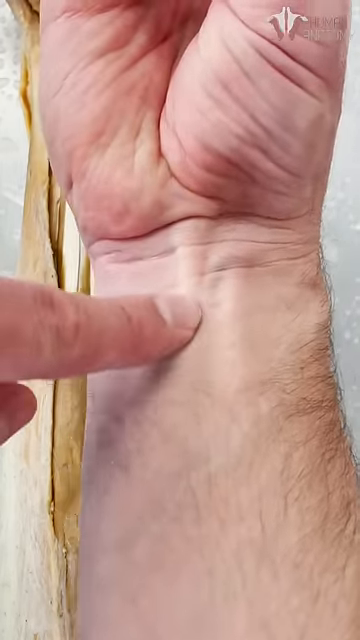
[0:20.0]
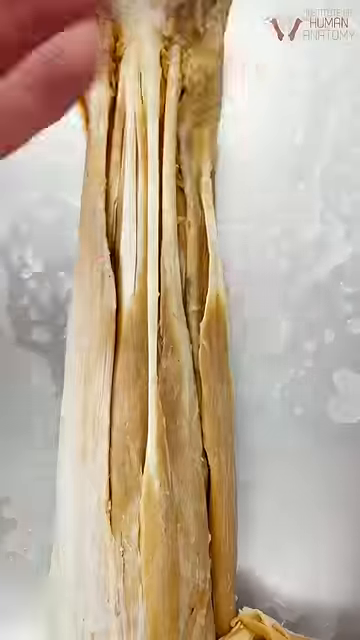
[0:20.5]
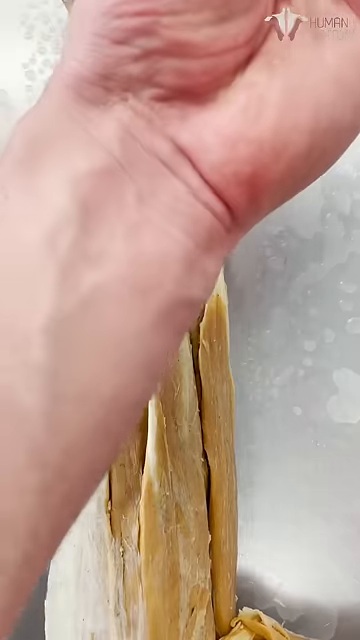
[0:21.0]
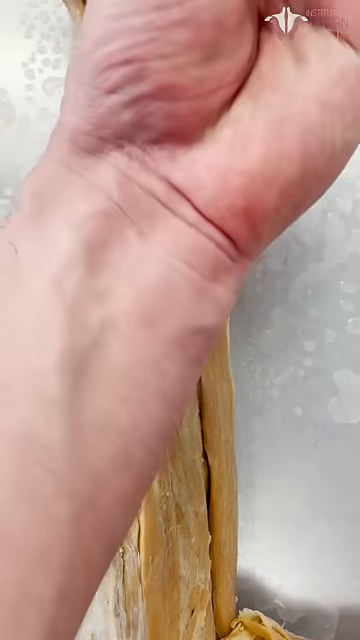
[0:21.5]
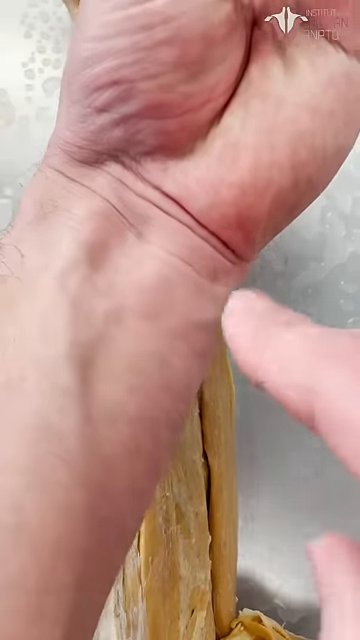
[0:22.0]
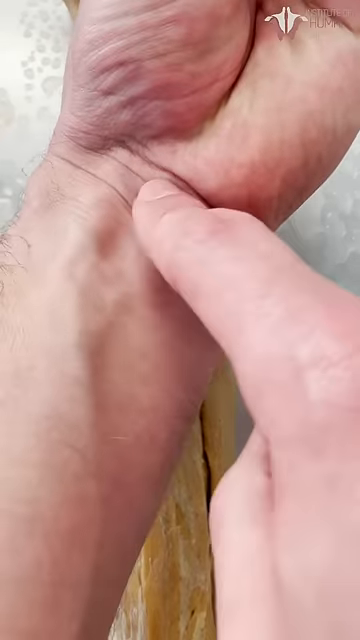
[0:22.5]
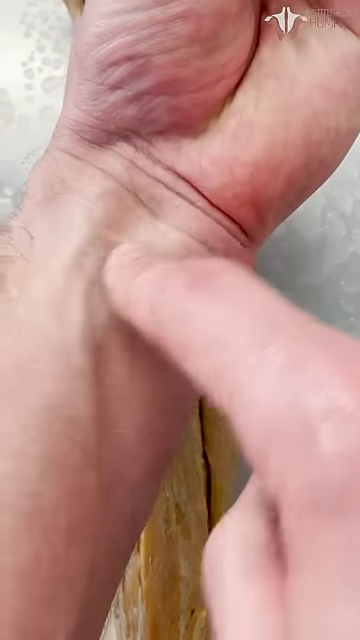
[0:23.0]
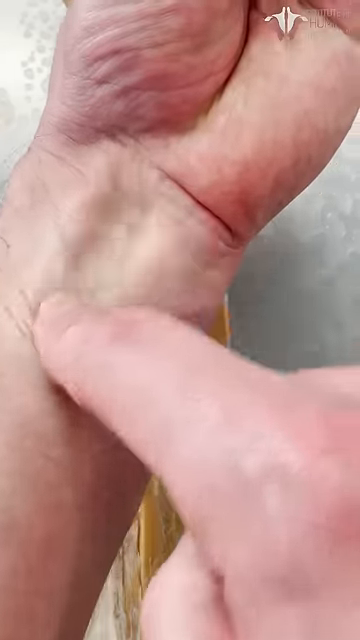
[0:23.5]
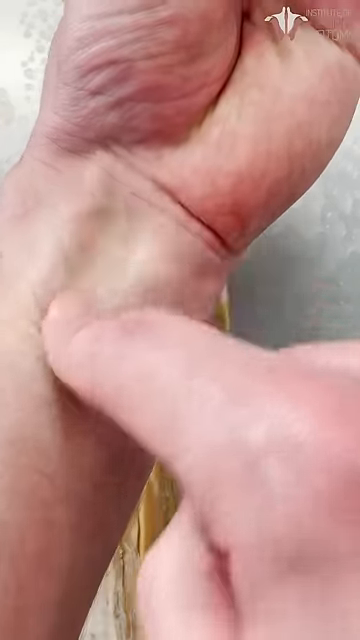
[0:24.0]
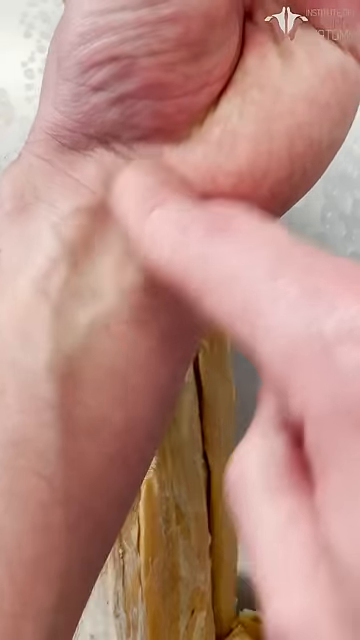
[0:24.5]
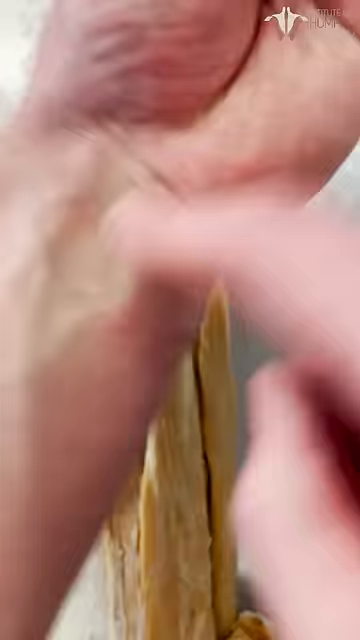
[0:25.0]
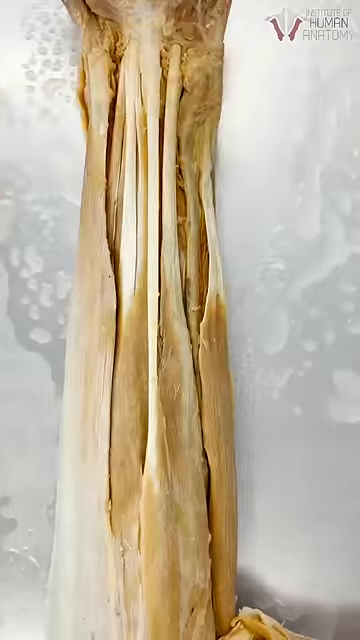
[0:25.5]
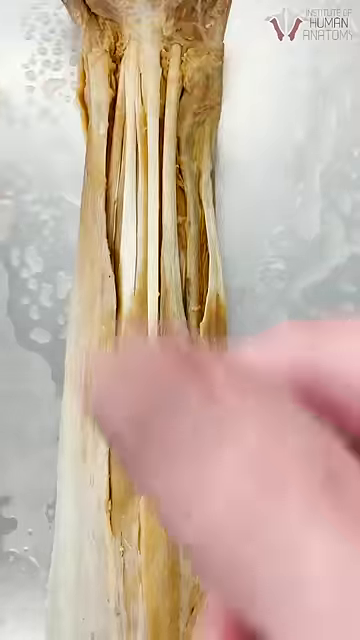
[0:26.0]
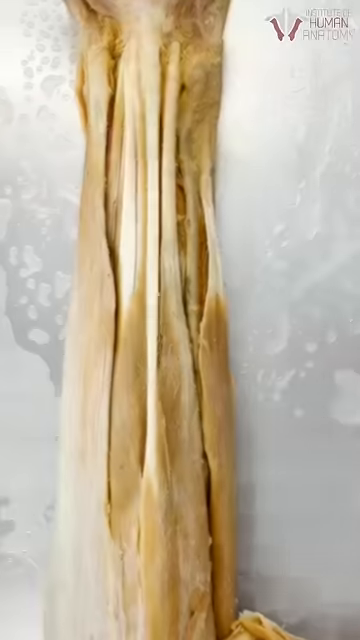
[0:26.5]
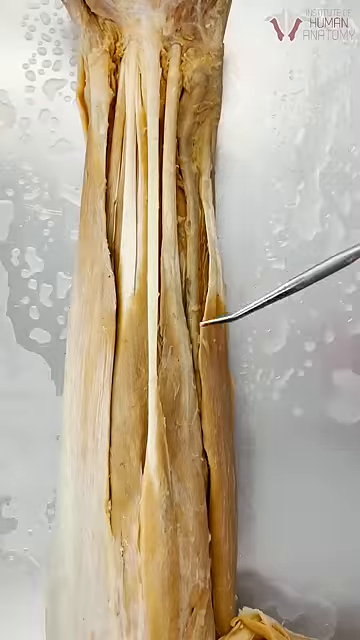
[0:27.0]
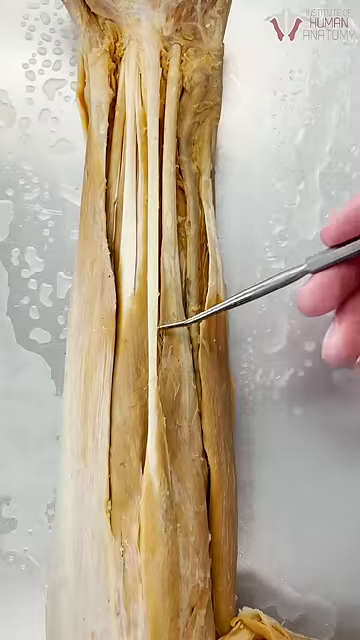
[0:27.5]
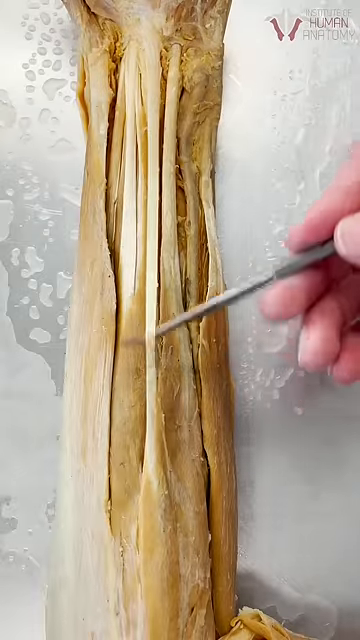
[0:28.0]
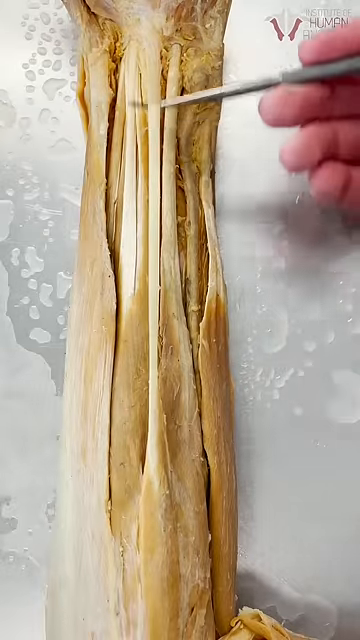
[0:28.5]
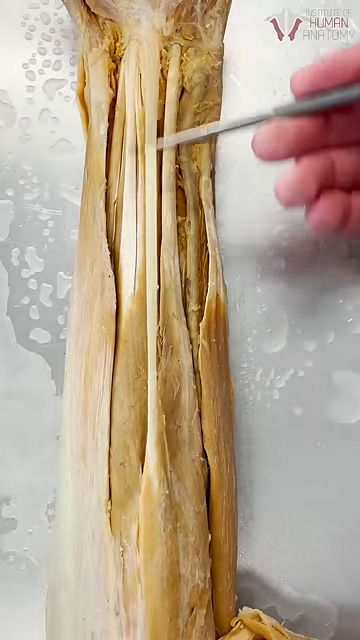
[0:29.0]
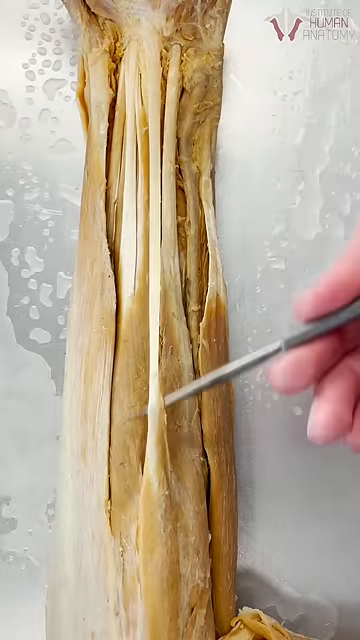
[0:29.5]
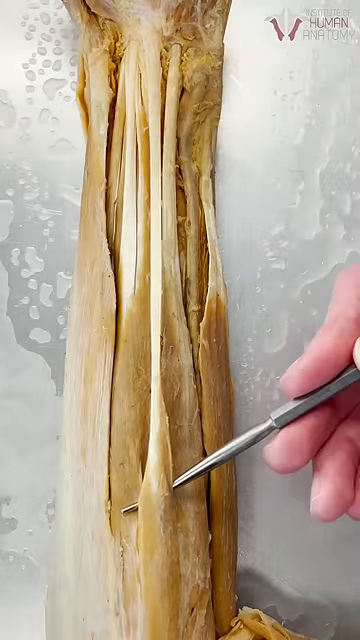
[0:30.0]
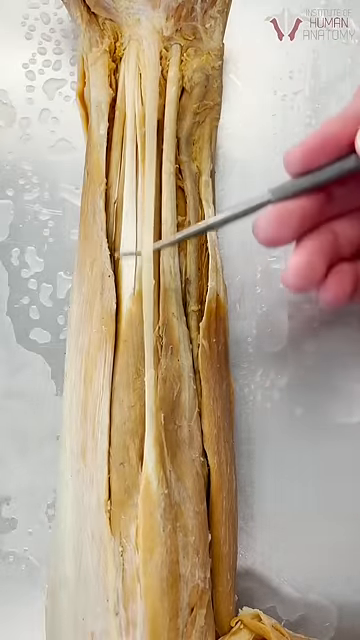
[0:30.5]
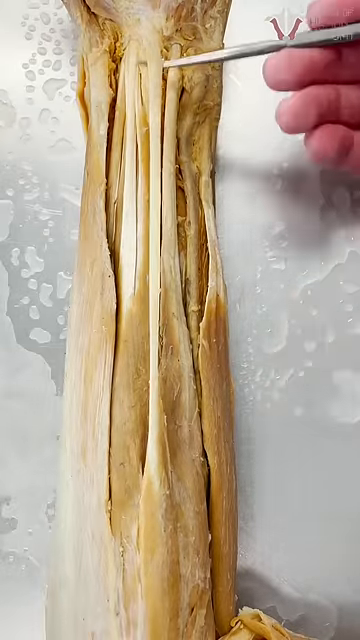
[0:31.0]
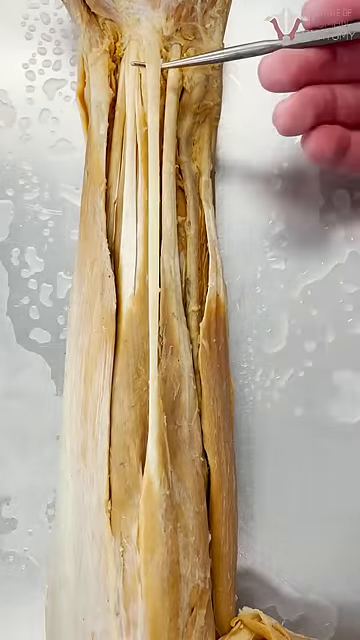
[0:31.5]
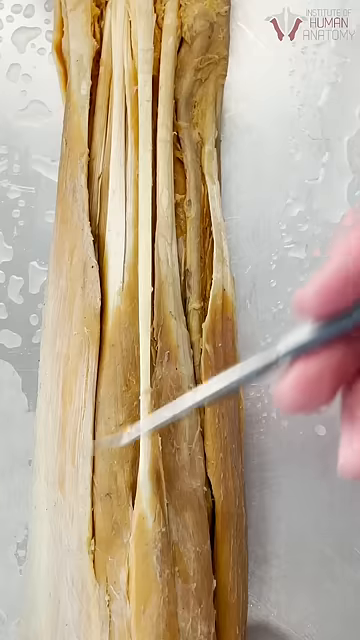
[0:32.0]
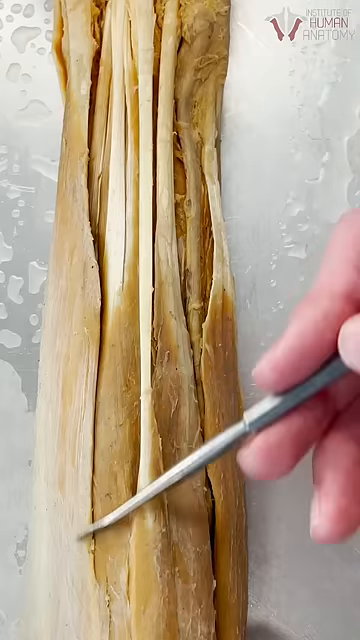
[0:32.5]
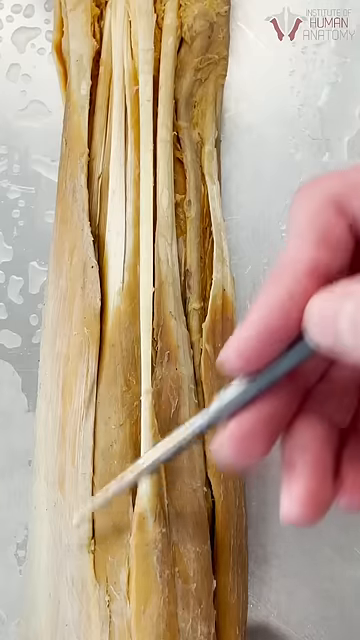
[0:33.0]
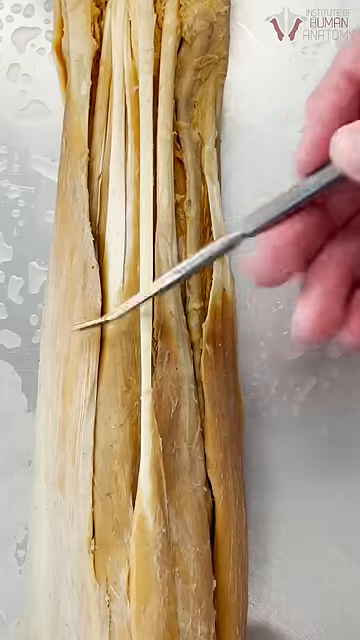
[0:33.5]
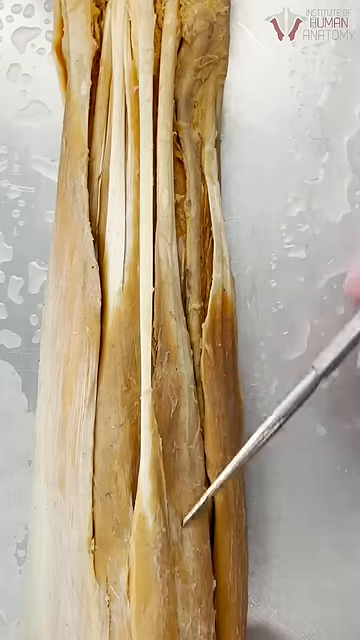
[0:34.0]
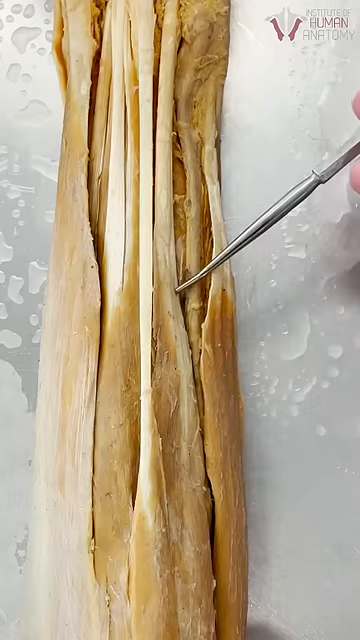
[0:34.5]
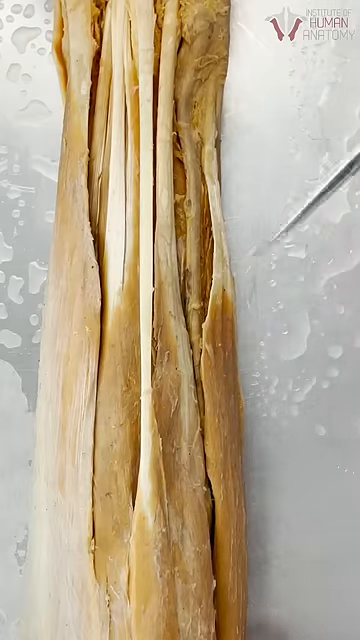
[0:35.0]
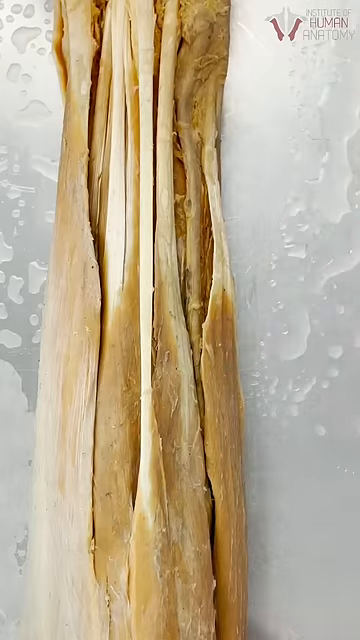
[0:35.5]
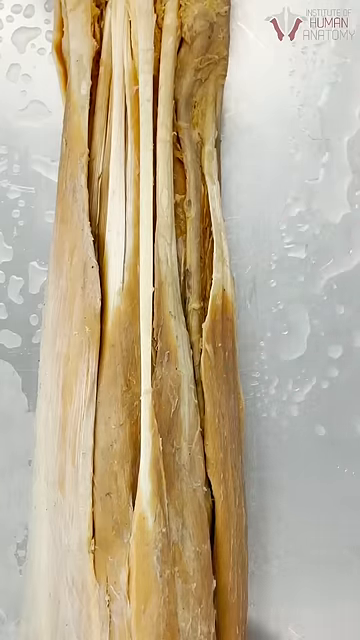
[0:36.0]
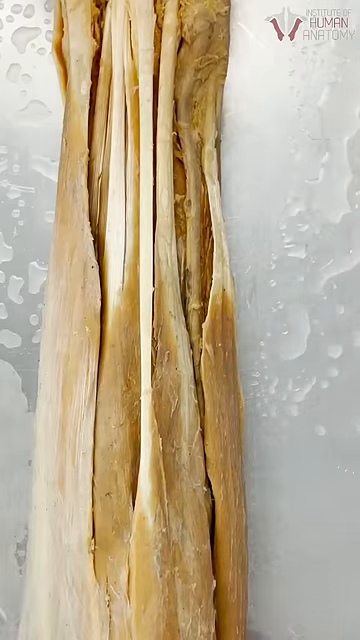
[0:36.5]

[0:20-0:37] The man continues trying to show the muscle in his skin. This time he uses his other arm and points to it with his other finger, running the finger up and down where it would be to emphasize where it might be. He then pulls his hands away and goes back to using the scalpel on the forearm model, going under the muscle, almost as if showing its tension, and kind of rubbing the scalpel around it on both sides, showing the muscles involved in this area of the arm. Everything is on a clean background with water drops on it, apparently to indicate that it is clean.